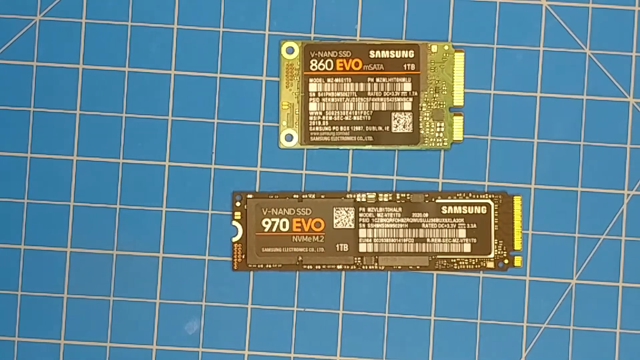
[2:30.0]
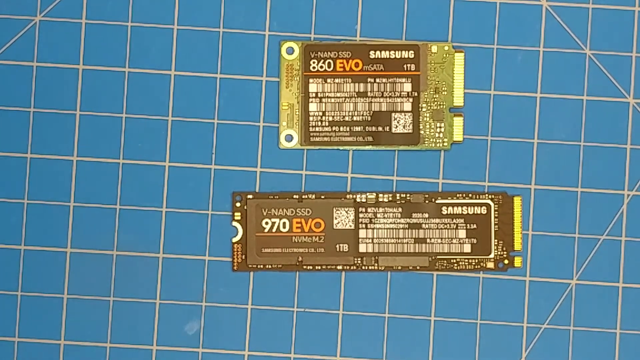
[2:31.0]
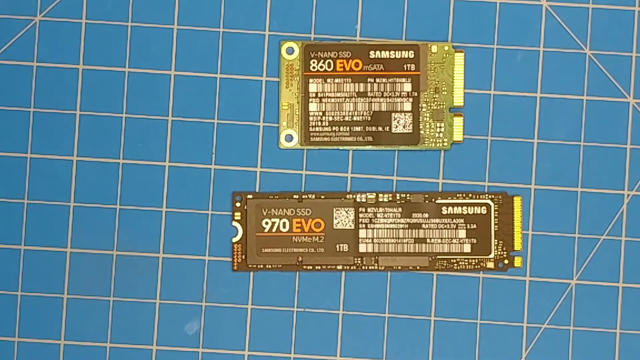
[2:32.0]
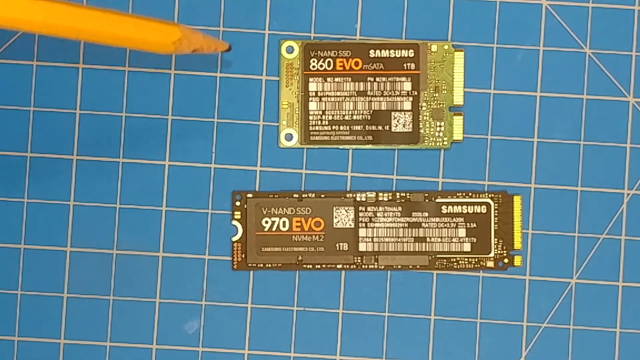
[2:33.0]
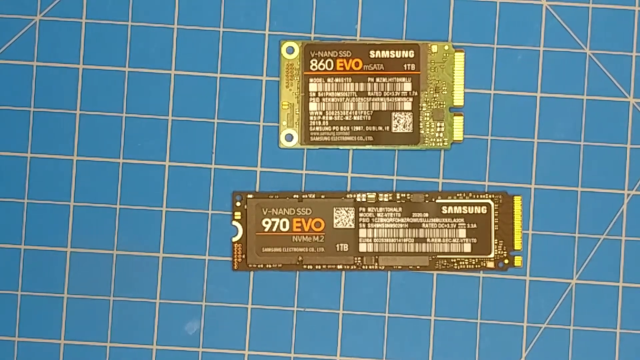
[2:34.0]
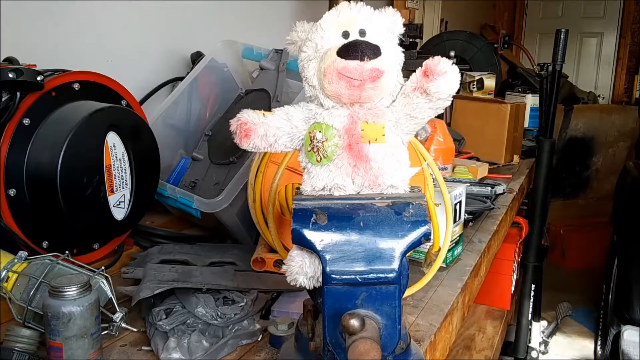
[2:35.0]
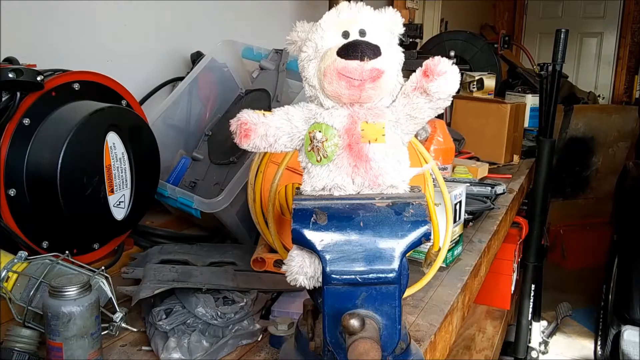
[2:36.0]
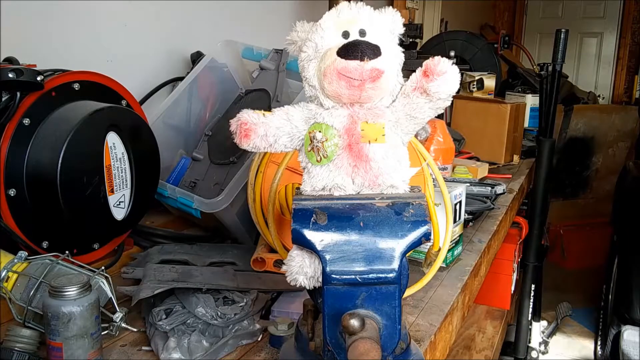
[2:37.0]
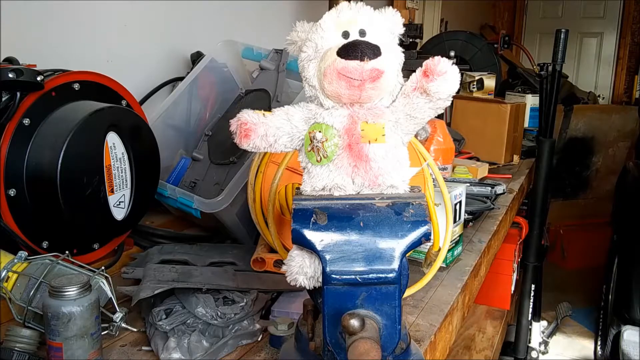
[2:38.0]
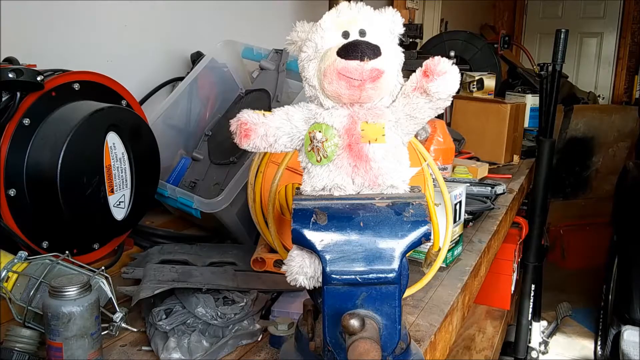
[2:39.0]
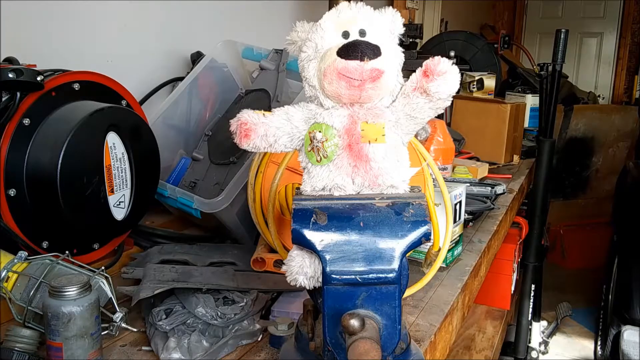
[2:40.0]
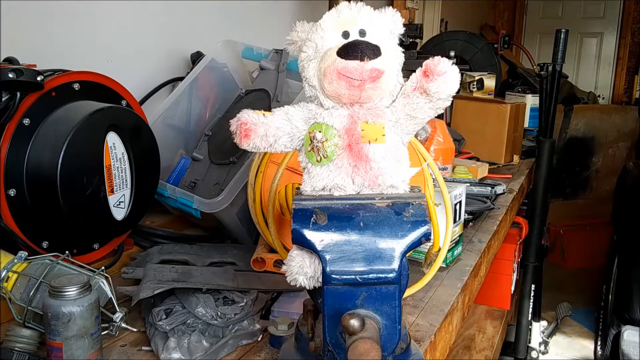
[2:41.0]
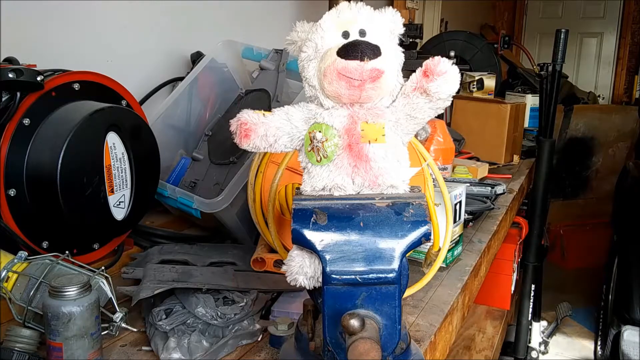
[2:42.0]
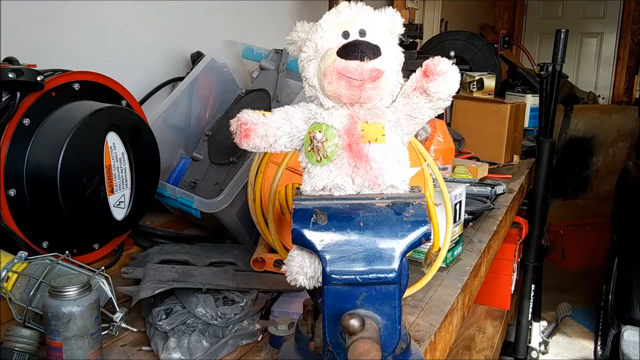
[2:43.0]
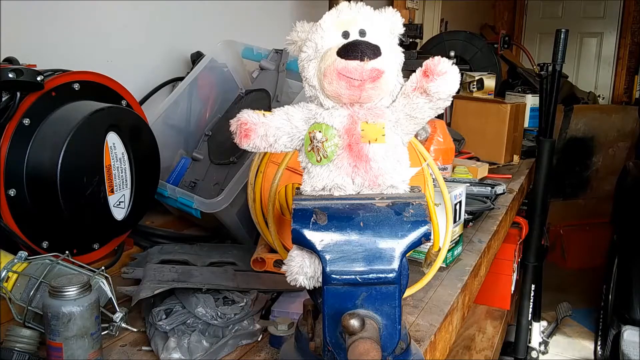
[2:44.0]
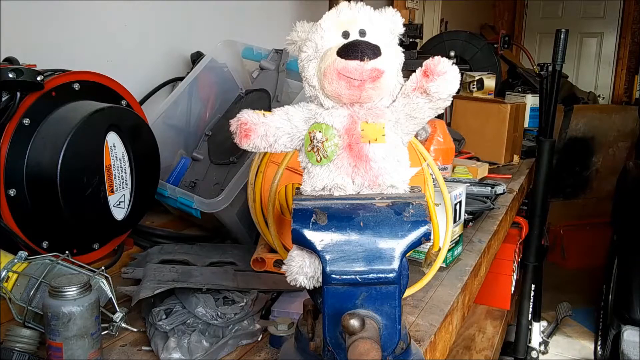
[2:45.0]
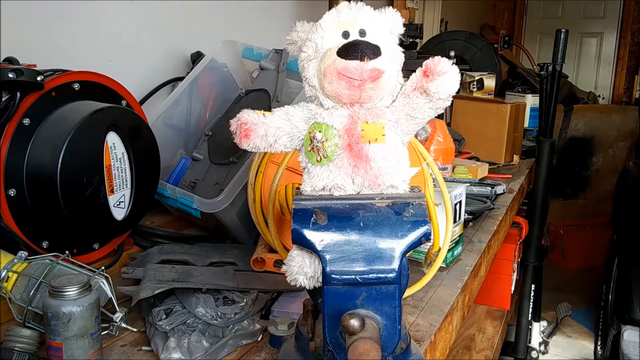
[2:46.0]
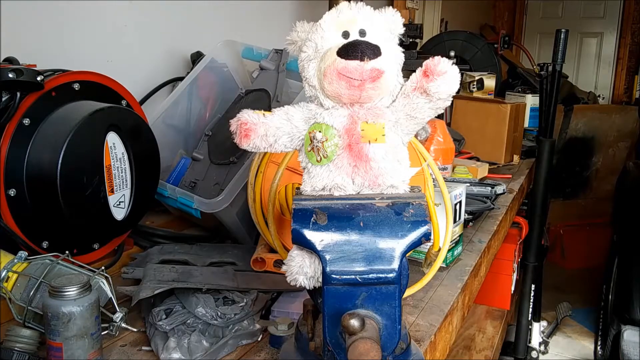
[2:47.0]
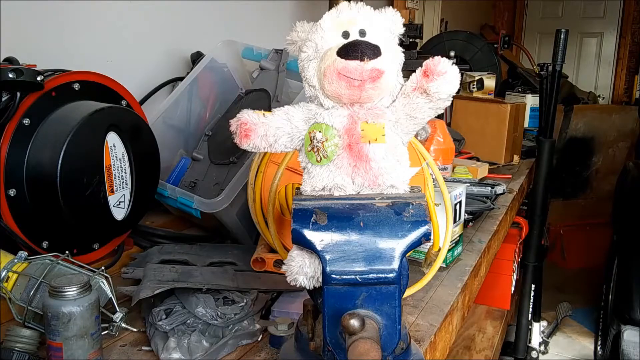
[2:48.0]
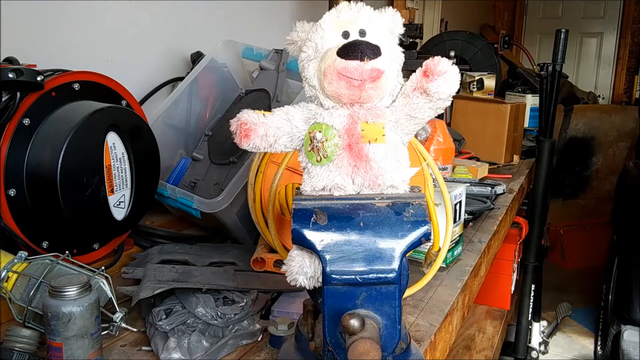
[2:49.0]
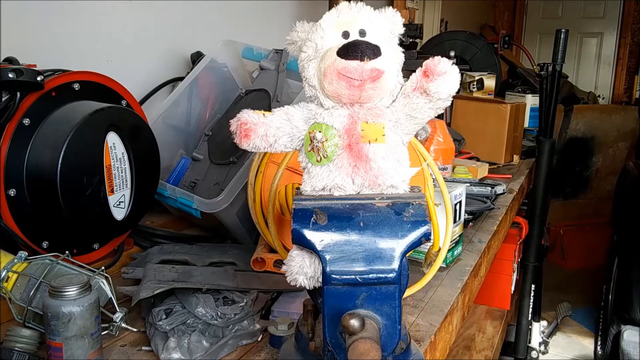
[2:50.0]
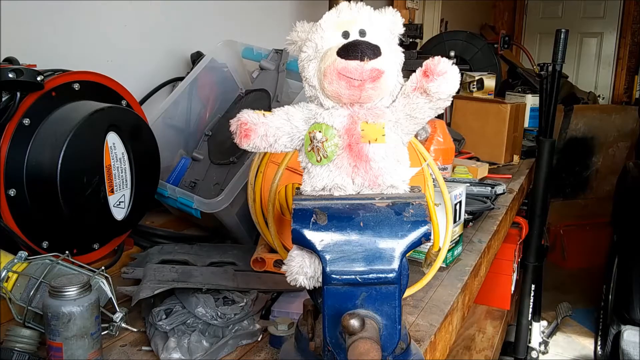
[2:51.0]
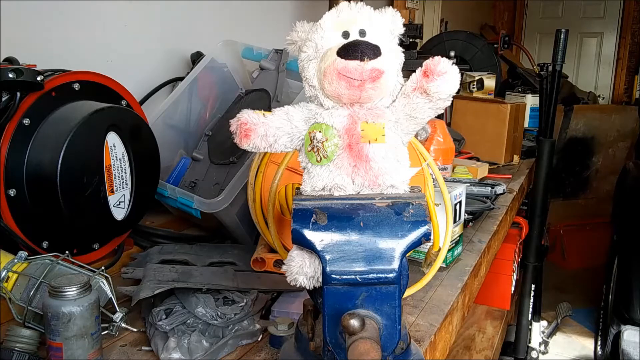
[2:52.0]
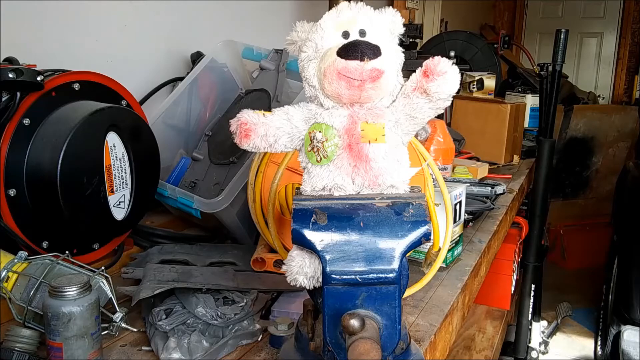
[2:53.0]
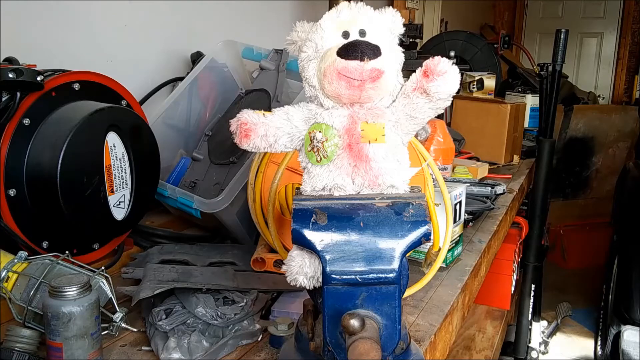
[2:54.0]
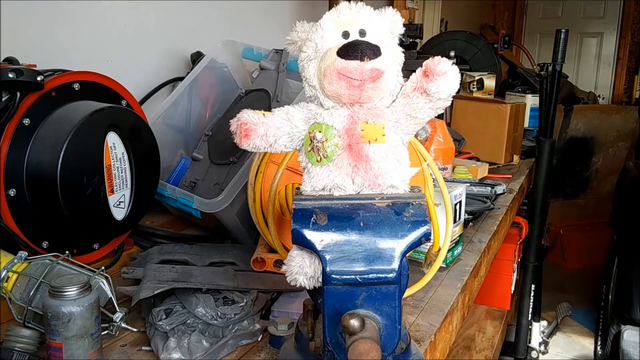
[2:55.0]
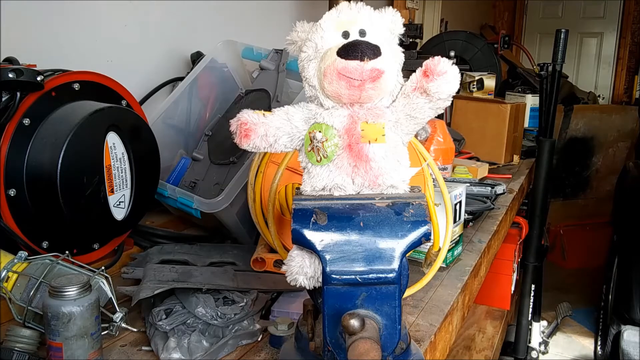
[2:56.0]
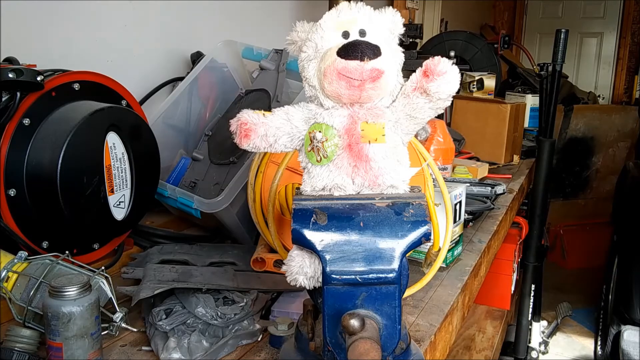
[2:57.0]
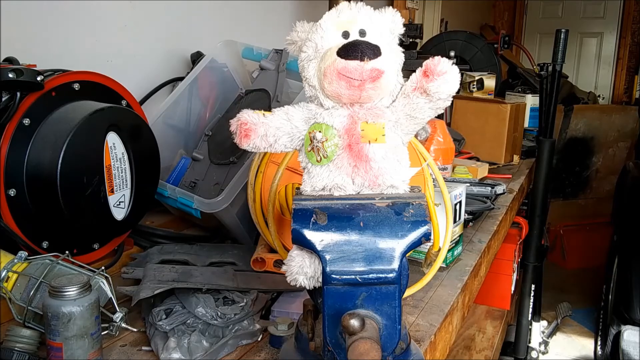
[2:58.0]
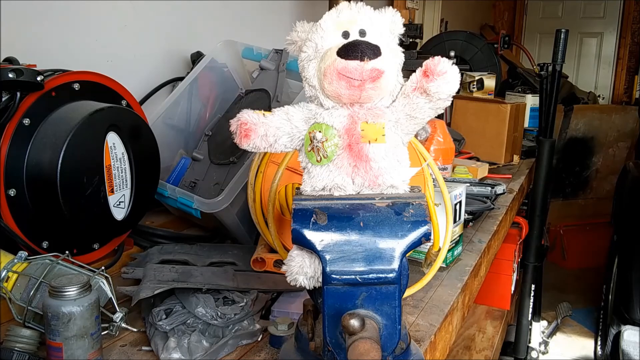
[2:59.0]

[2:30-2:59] The two chips are still shown, and a person briefly taps a pencil on a chip, less aggressively than before. The view then pans over to what seems to be a workshop in a basement or a cluttered house. A workbench of sorts is heavily populated with items. Standing out is what seems to be a teddy bear in the middle of what seems to be a blue vice; the bear has a smile on its face and its arms out. Other items on the table seem to be work tools, including a cylinder-shaped piece of possible power equipment and what seems to be a plastic bin holding a few items. Outside the bin is what looks like something for an outlet, with many wires around. In the background is what looks like a white door, an entrance.